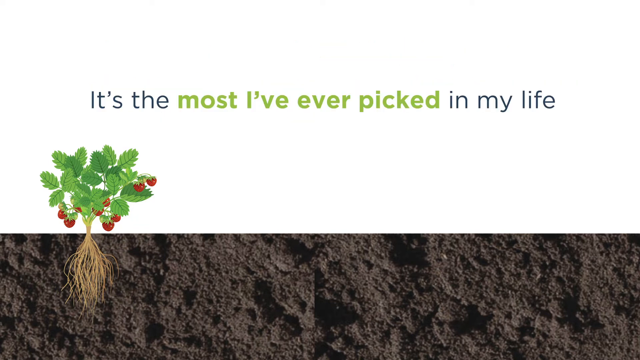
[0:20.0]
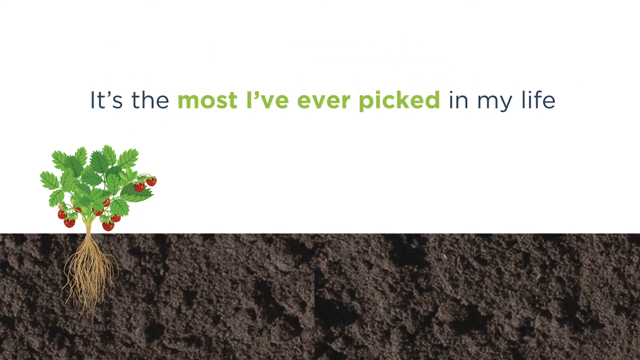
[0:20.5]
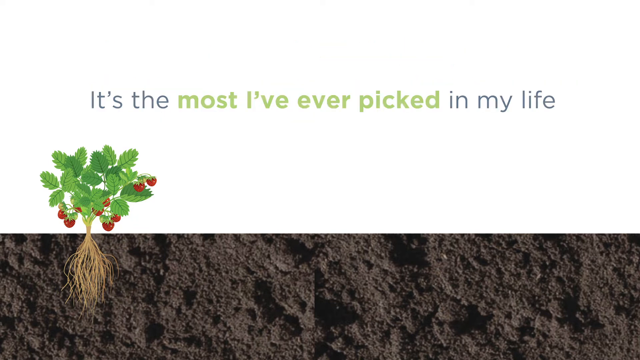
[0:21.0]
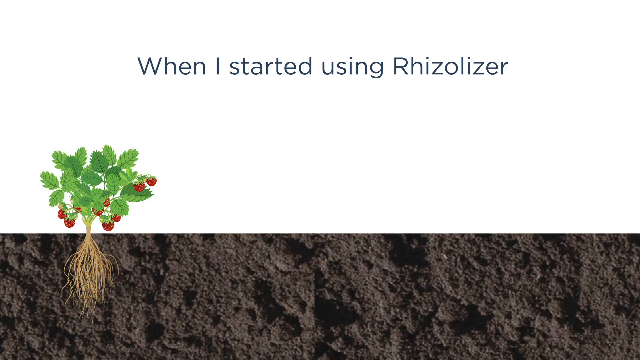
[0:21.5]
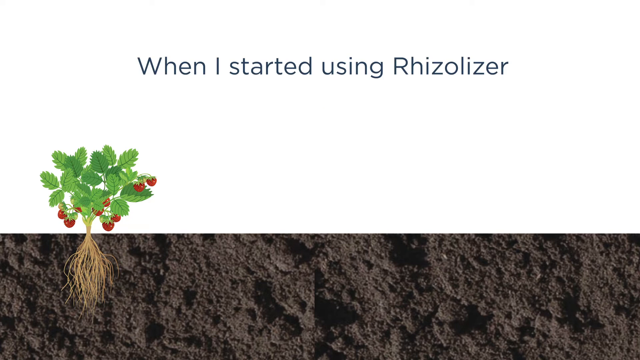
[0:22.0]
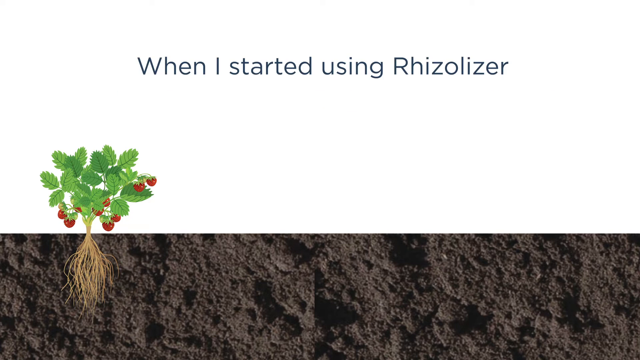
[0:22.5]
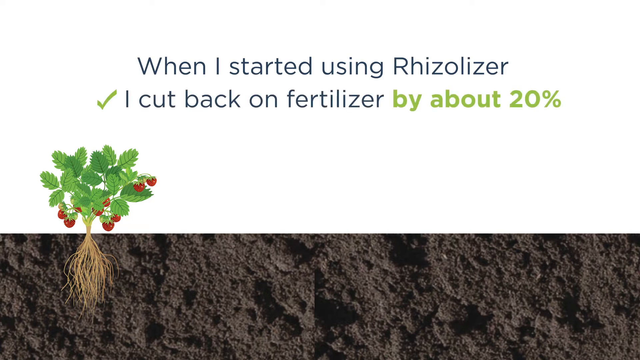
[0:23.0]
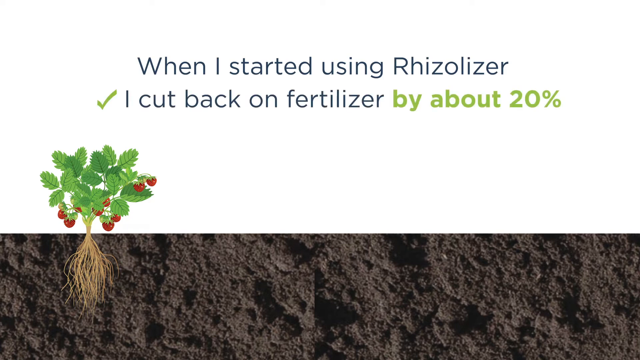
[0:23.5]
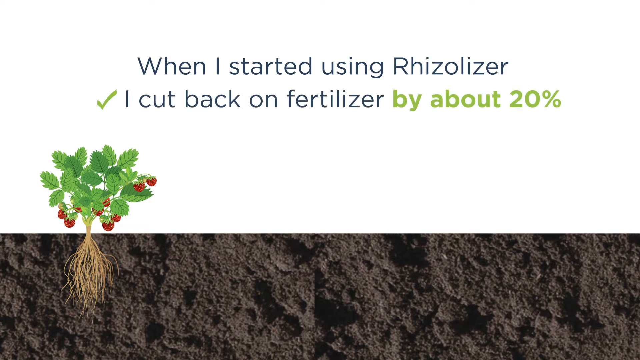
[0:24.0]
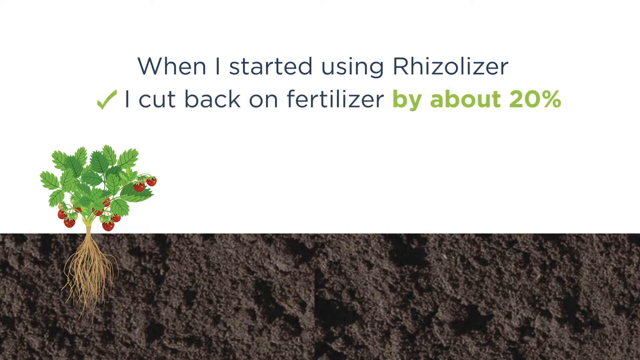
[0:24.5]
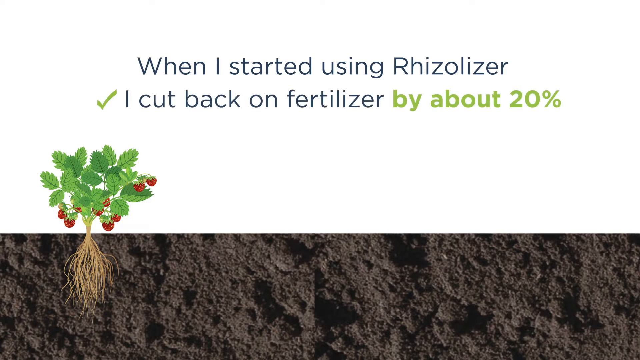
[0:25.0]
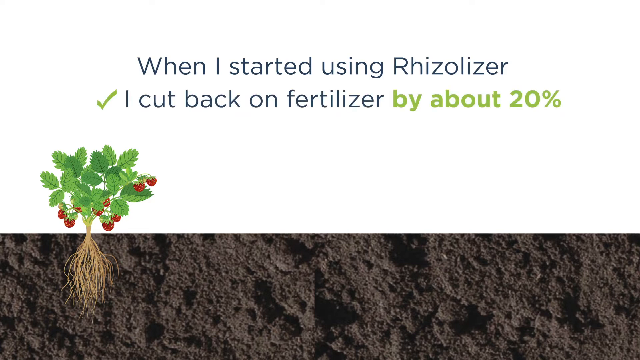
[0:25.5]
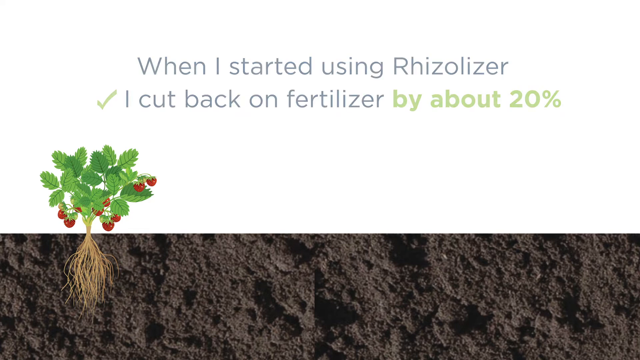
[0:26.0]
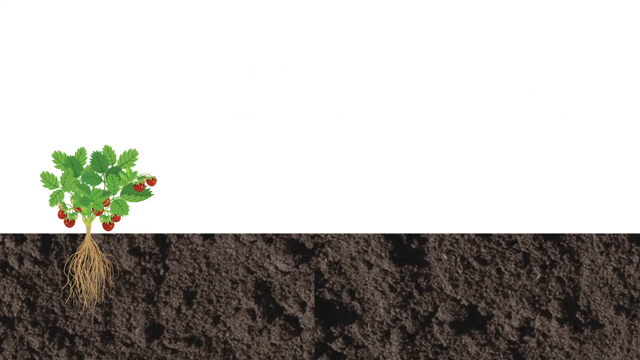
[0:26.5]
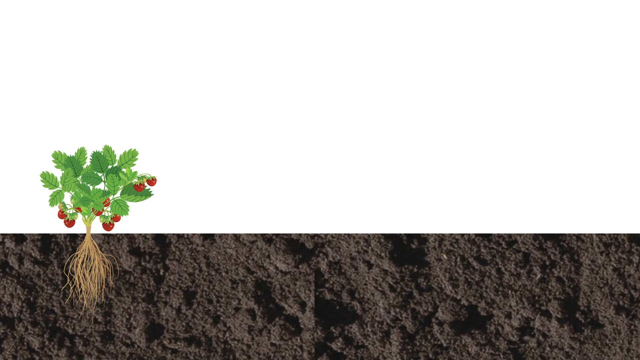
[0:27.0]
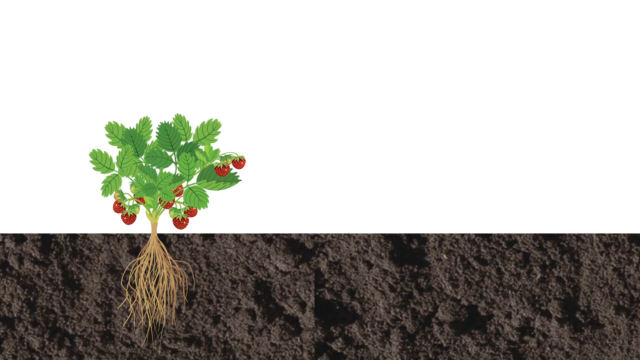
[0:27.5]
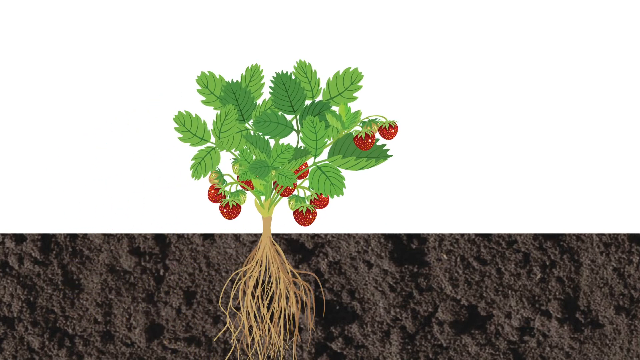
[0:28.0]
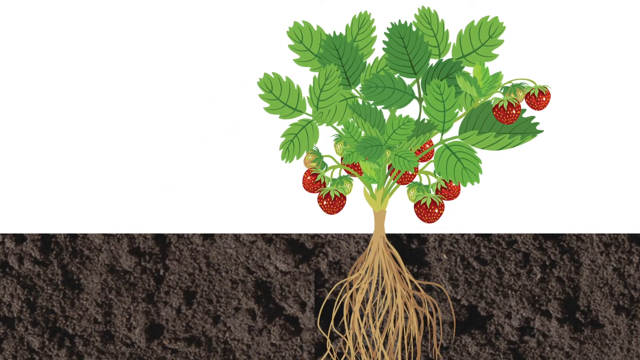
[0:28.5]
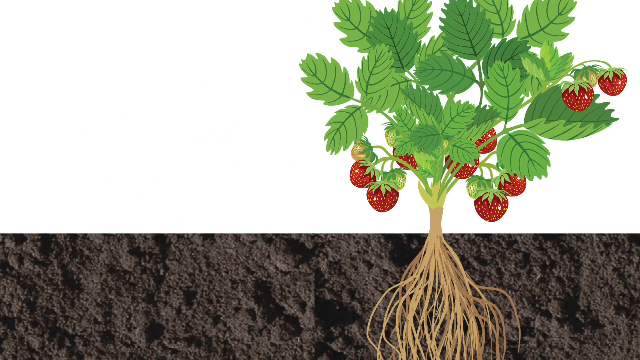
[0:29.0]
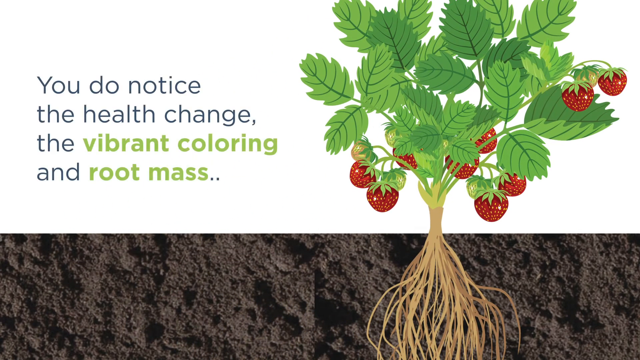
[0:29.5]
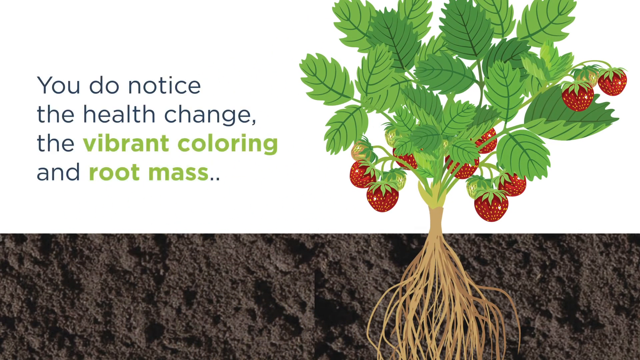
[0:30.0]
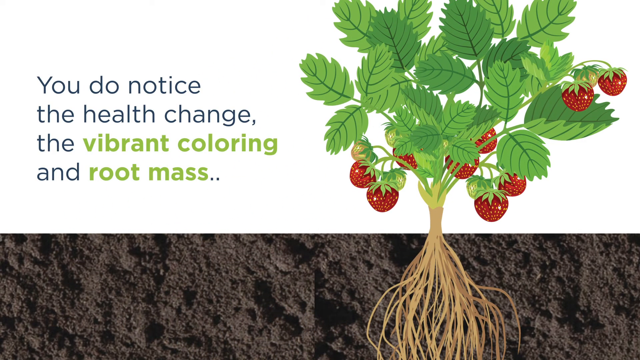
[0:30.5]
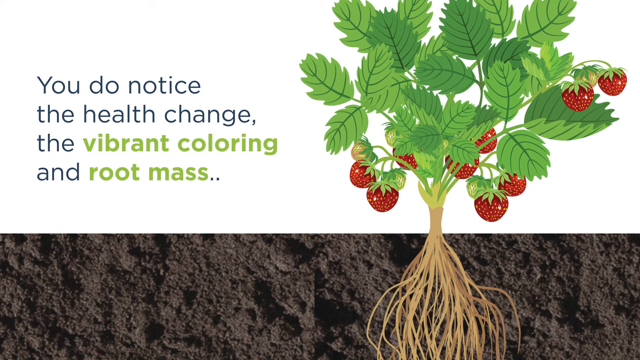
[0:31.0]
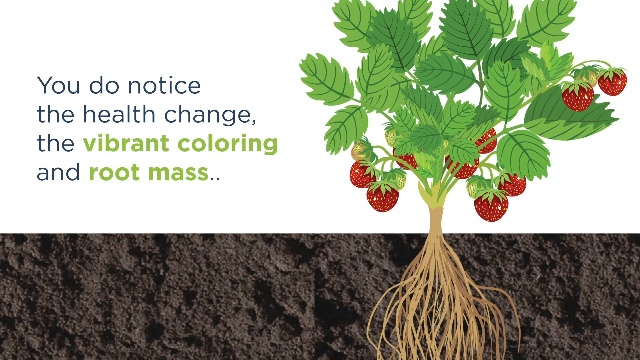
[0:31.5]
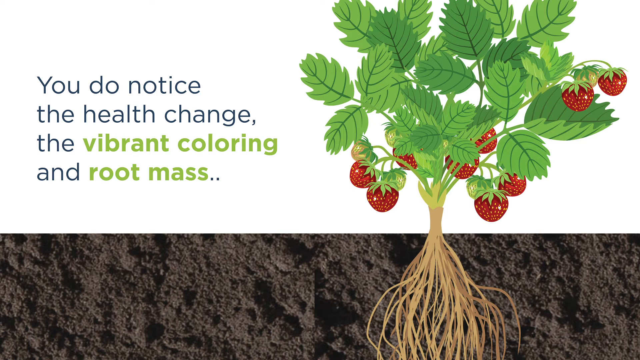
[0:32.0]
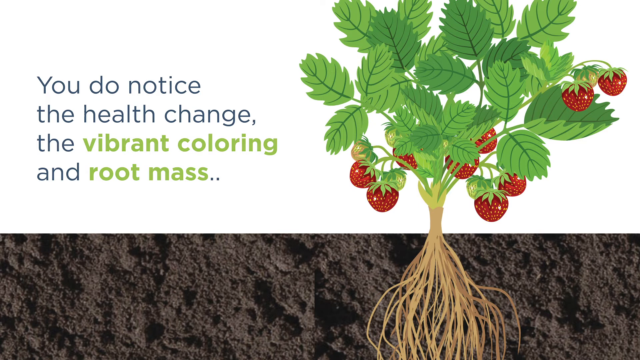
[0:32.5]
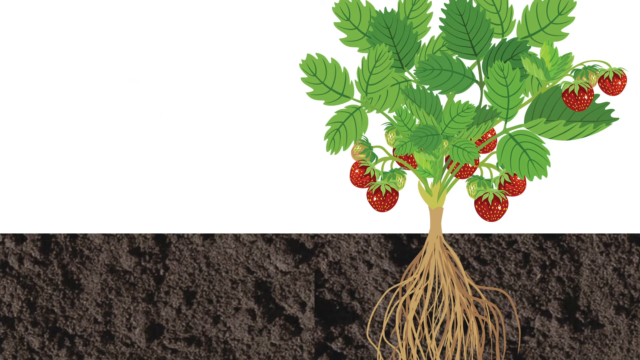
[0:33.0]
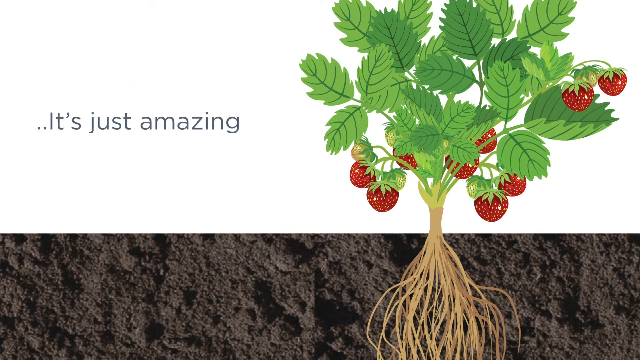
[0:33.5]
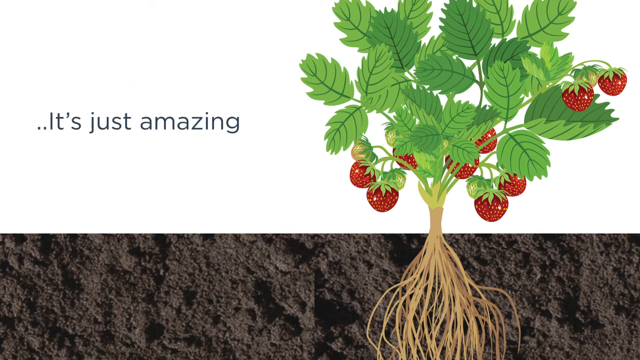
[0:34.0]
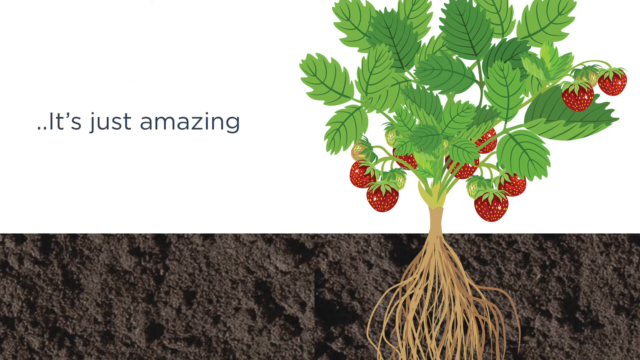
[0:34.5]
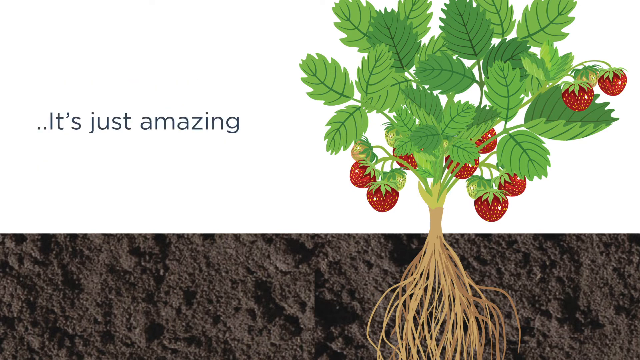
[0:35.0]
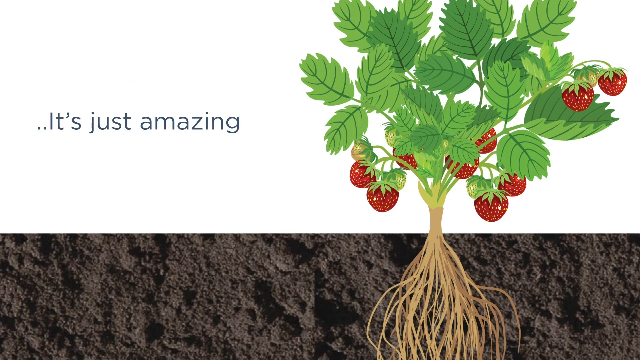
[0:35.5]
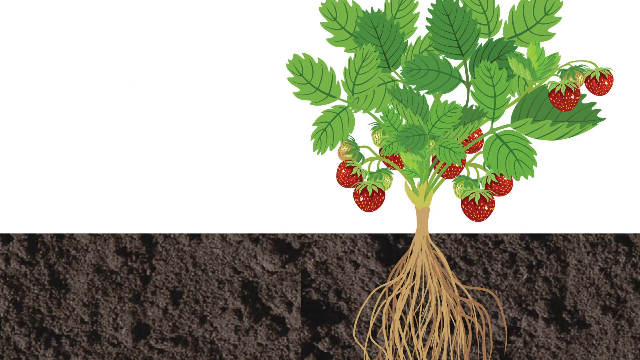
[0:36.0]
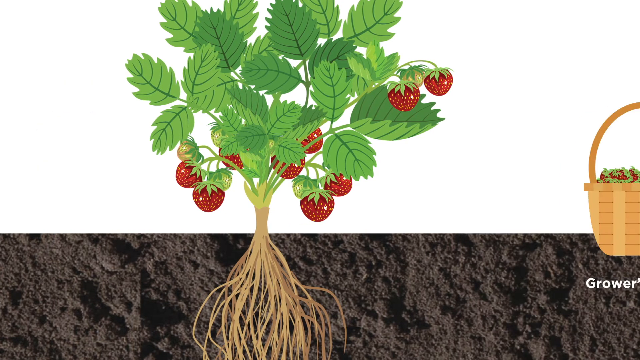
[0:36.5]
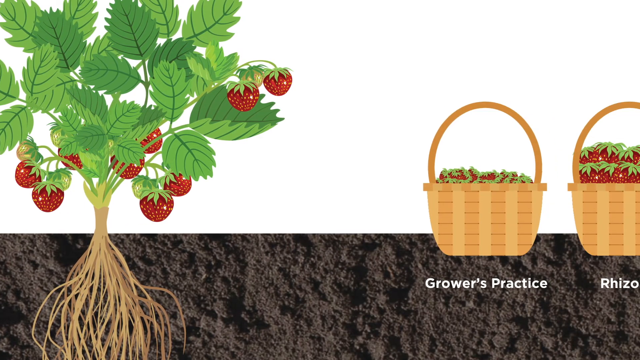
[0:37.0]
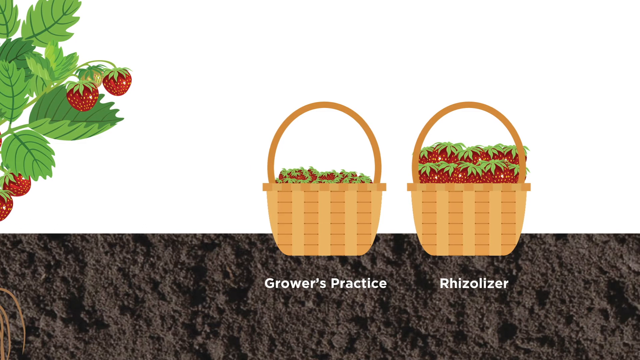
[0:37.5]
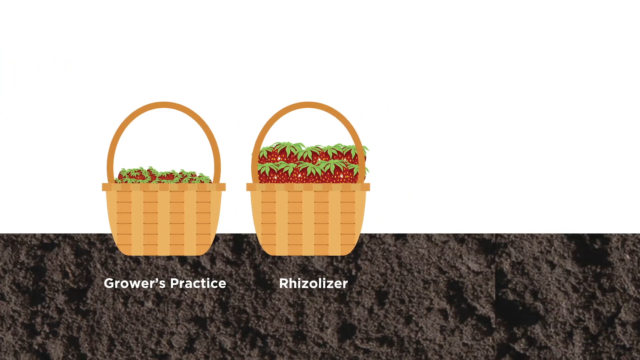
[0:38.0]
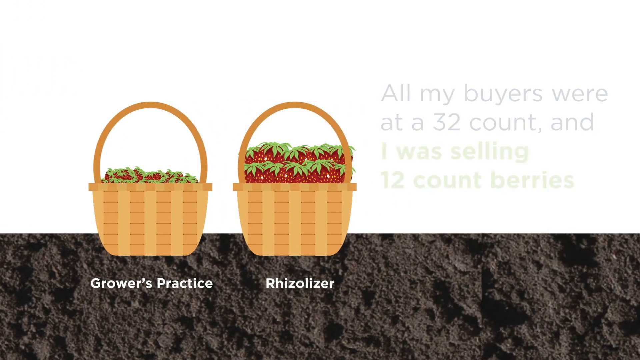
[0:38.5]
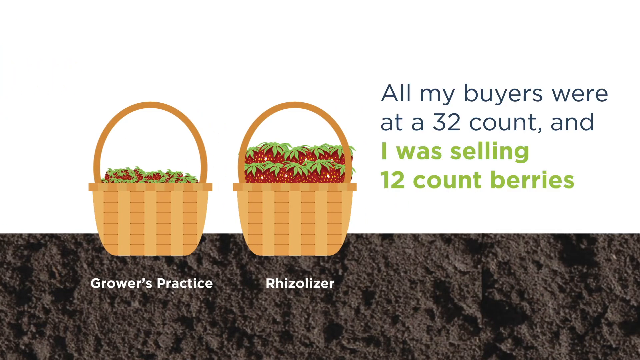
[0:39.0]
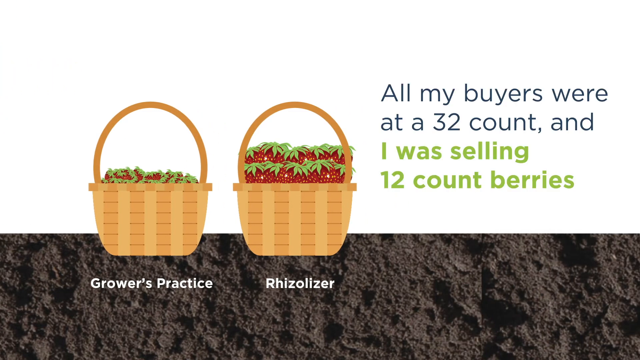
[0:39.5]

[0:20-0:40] The same layout continues, with a crop on the lower left side of the frame that is supposed to be some kind of vegetable. A line of text appears above it reading, "When I started using Rhizolizer, I cut back on fertilizer by about 20%." The crop then gets larger as the view zooms in, becoming quite large and moving to the right, so the text is now on the left side of the crop: "You do notice the health change, the vibrant coloring and root mass. It's just amazing." The camera then pans to the right to show two picnic baskets in vector art, one labeled "grower's practice" and the other labeled "Rhizolizer." Text appears on the right side reading, "All my buyers were at a 32 count and I was selling 12 count berries."